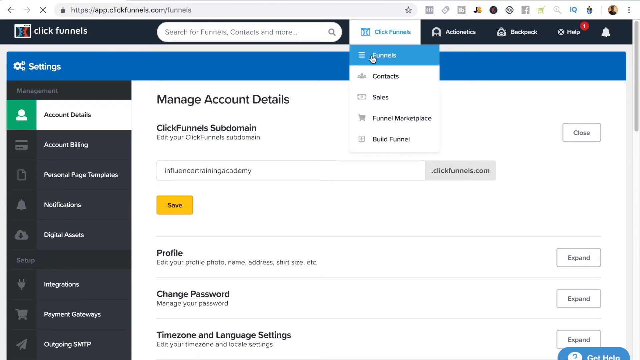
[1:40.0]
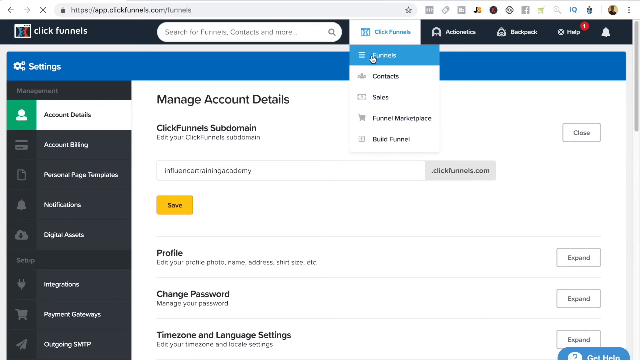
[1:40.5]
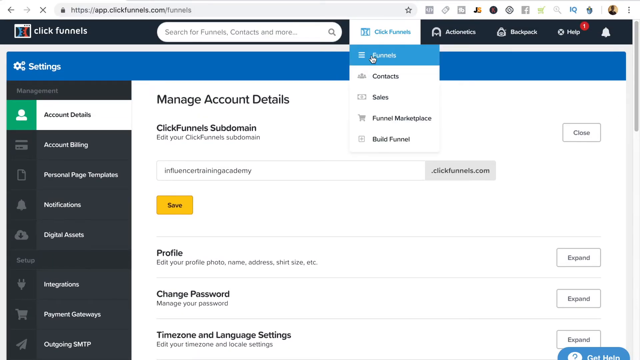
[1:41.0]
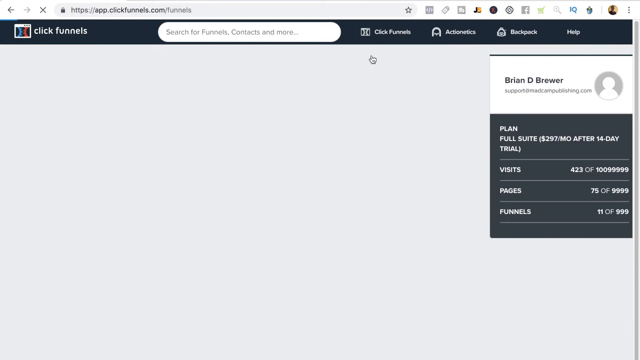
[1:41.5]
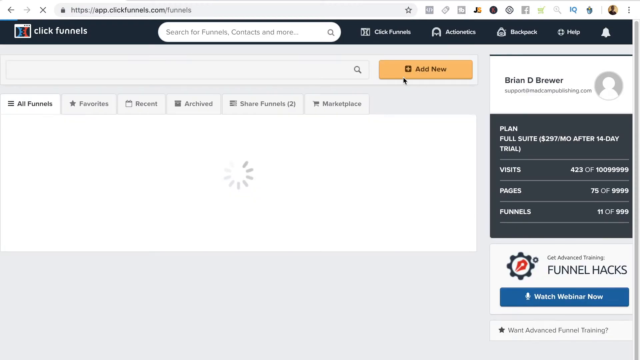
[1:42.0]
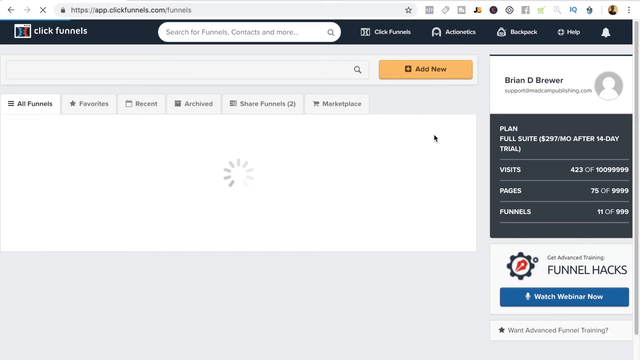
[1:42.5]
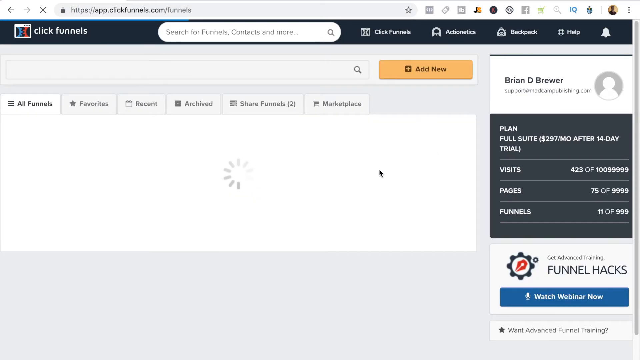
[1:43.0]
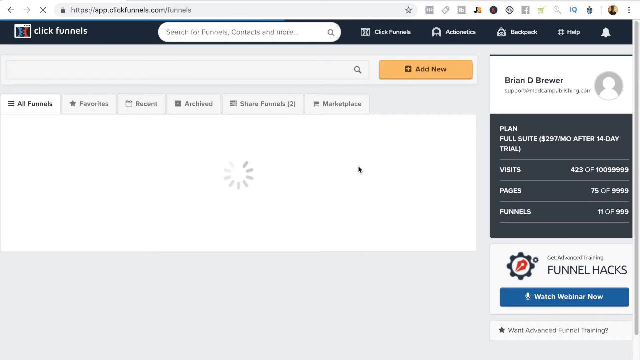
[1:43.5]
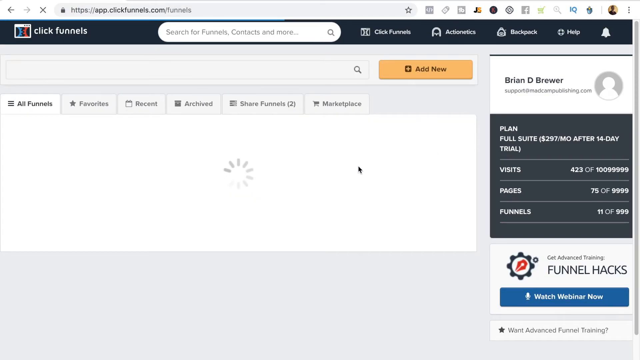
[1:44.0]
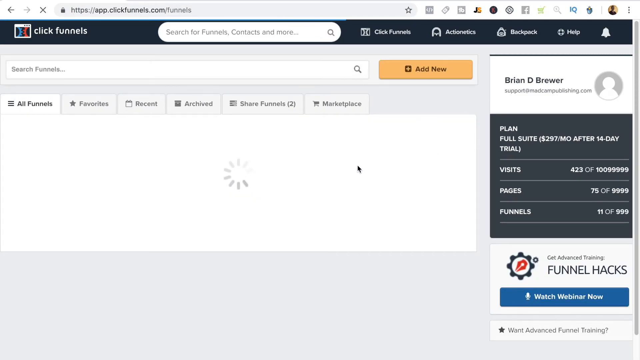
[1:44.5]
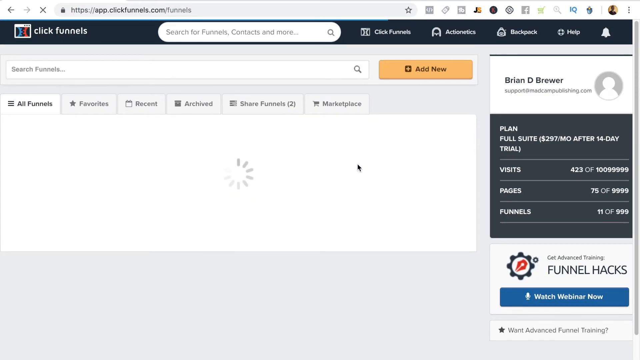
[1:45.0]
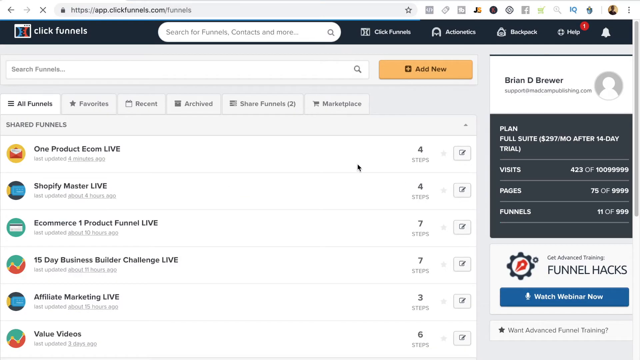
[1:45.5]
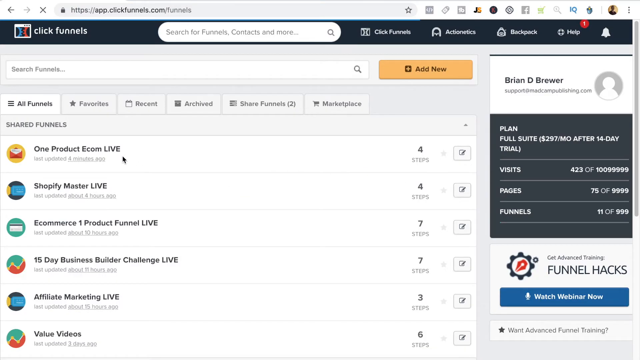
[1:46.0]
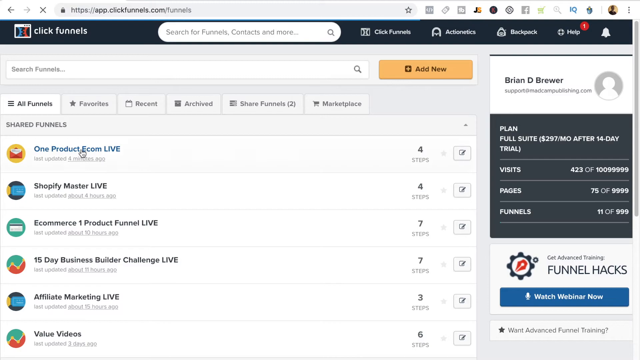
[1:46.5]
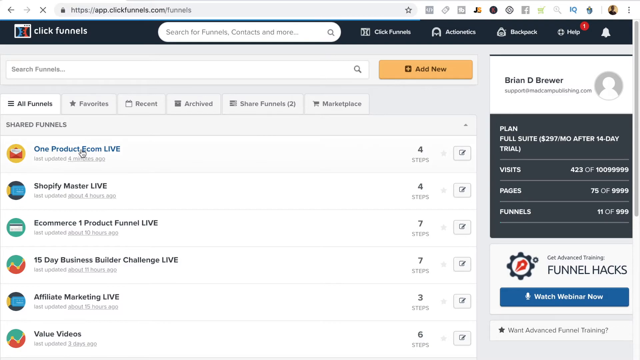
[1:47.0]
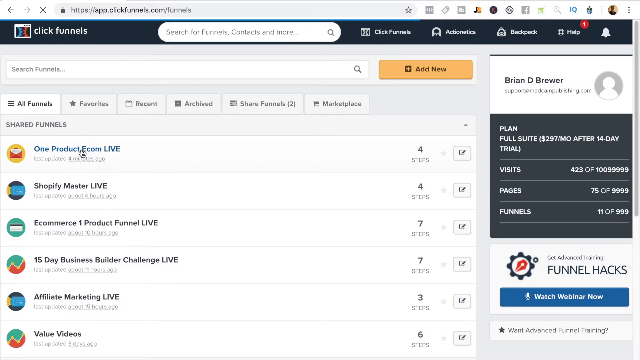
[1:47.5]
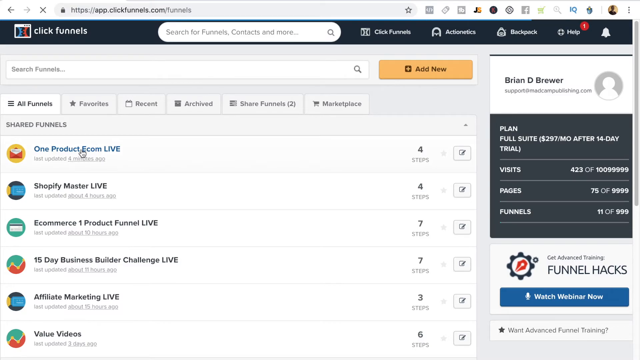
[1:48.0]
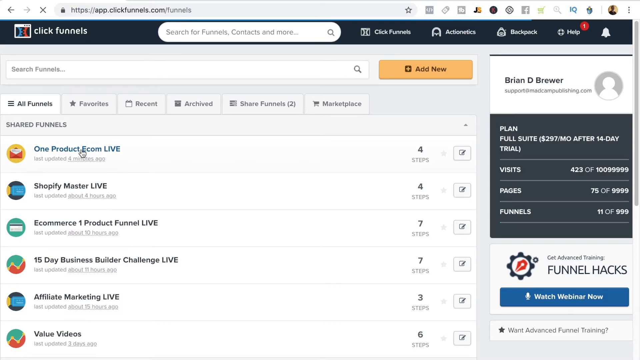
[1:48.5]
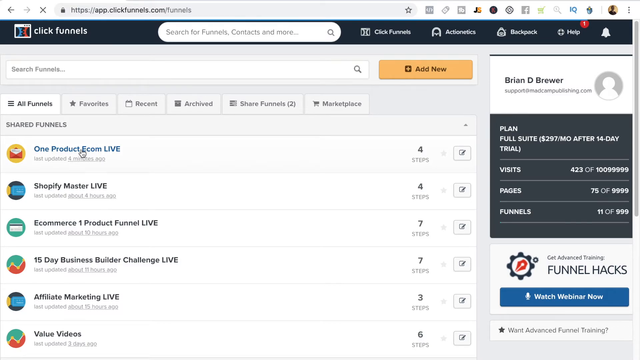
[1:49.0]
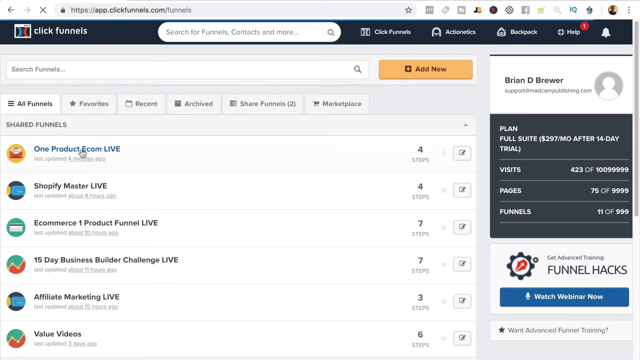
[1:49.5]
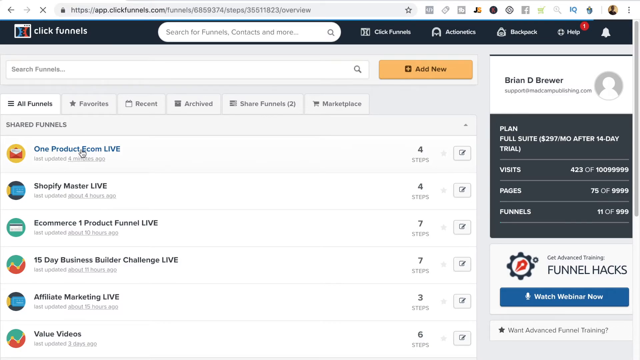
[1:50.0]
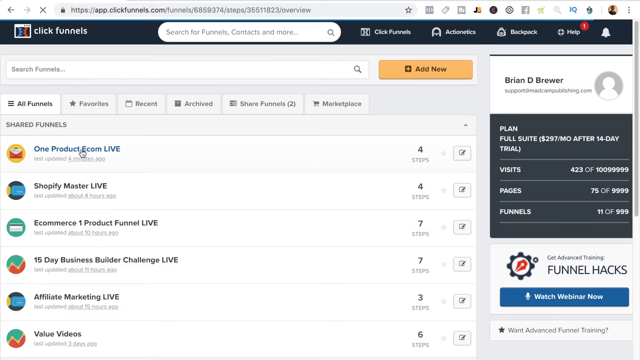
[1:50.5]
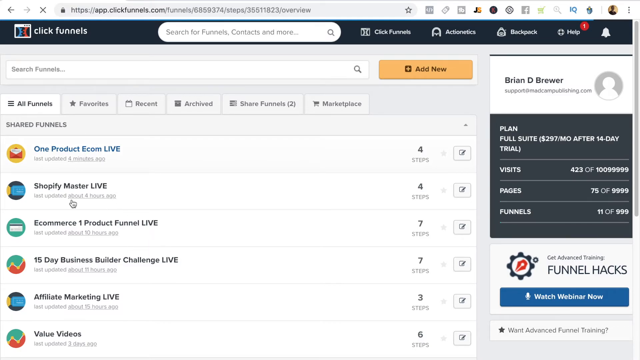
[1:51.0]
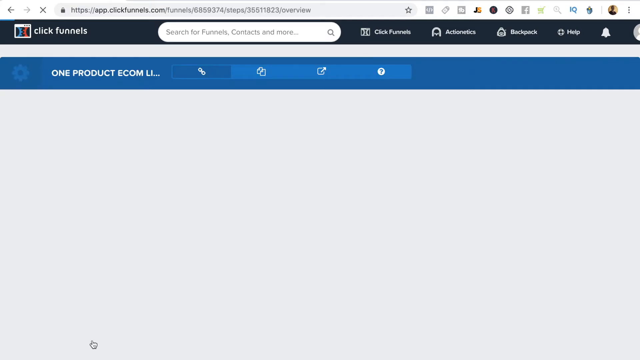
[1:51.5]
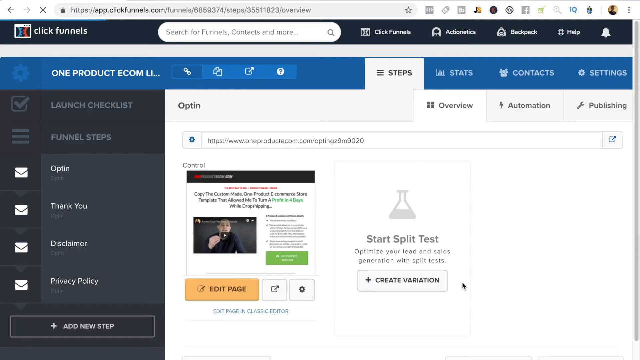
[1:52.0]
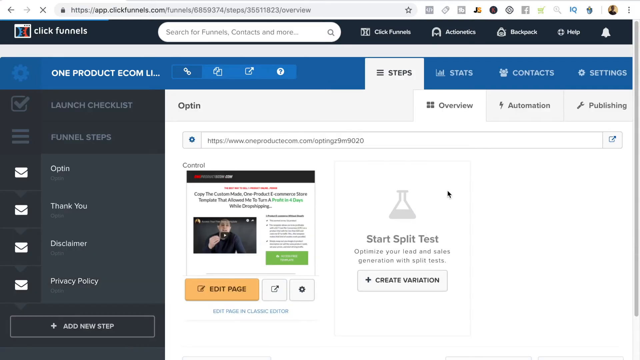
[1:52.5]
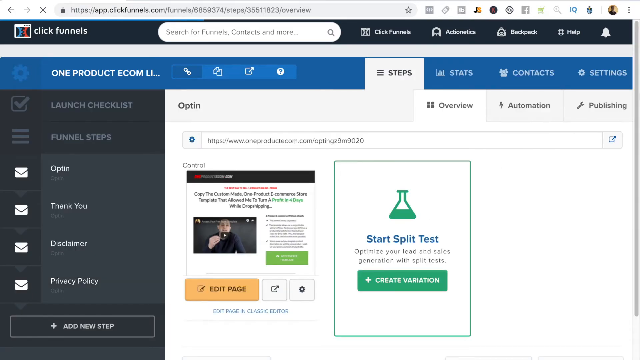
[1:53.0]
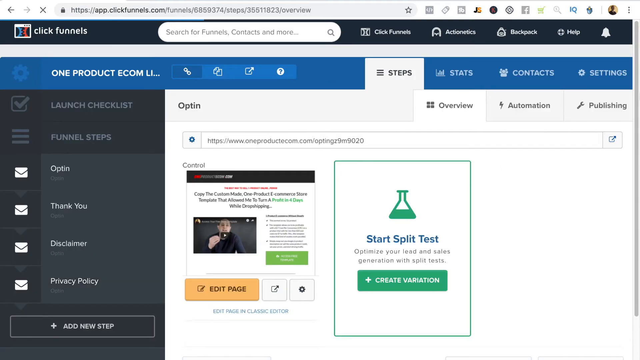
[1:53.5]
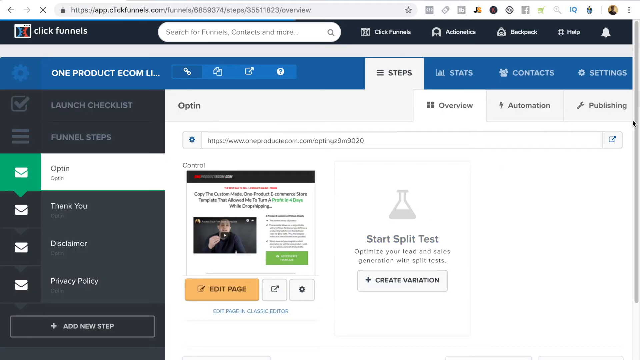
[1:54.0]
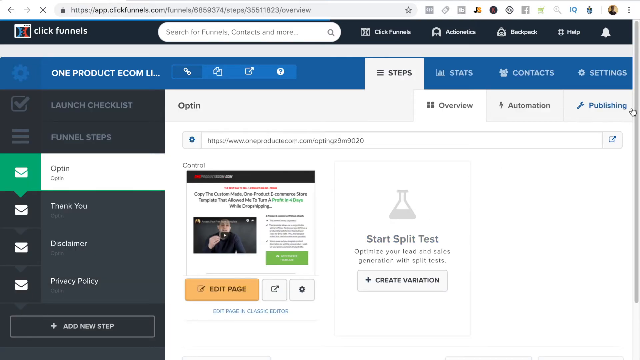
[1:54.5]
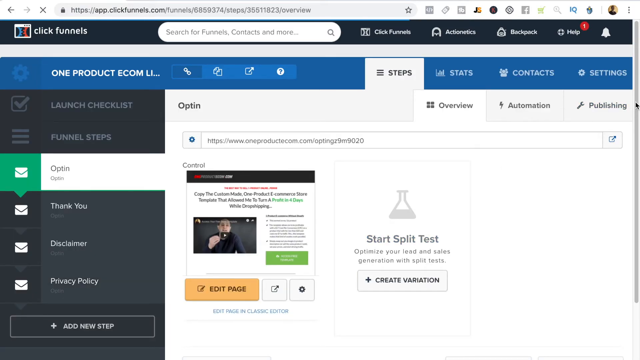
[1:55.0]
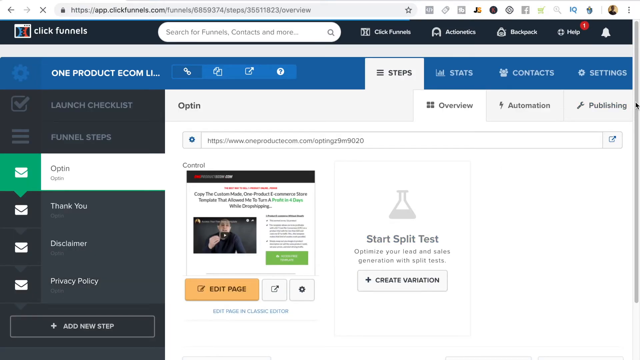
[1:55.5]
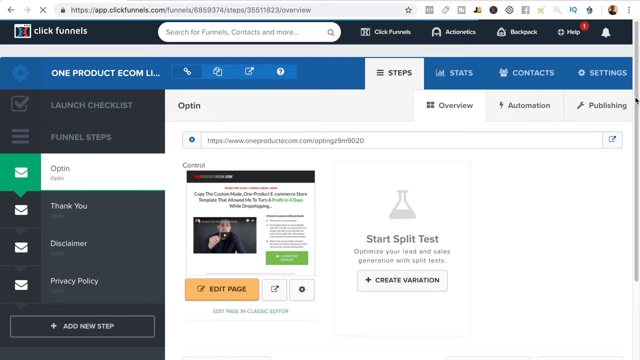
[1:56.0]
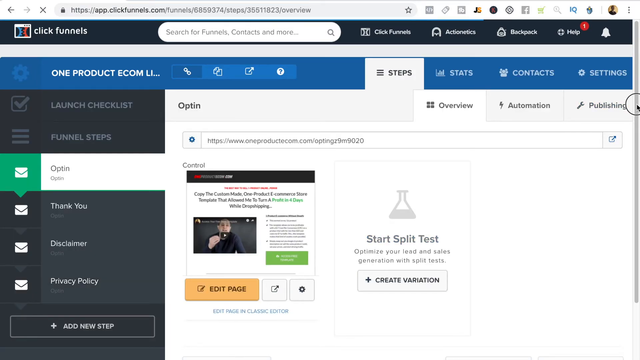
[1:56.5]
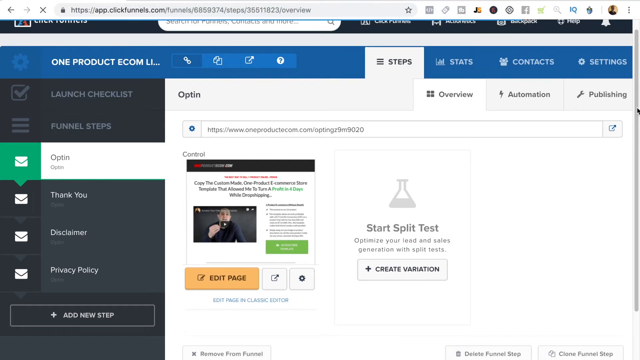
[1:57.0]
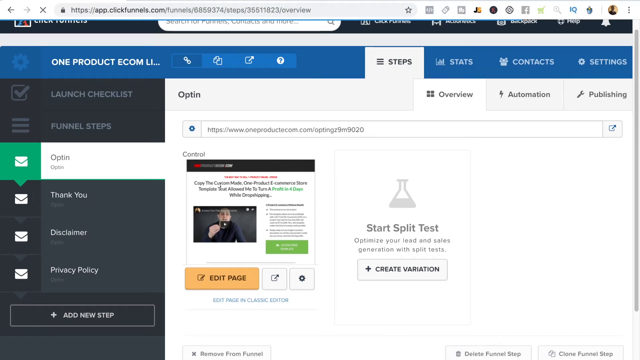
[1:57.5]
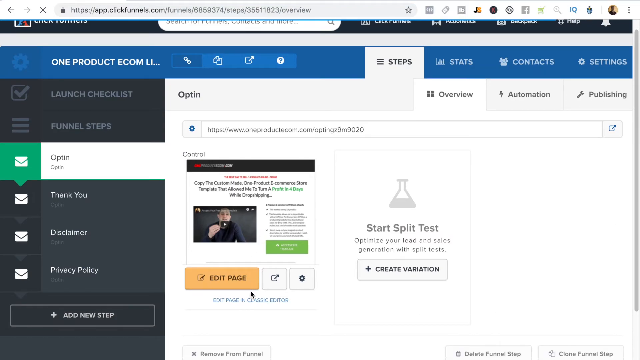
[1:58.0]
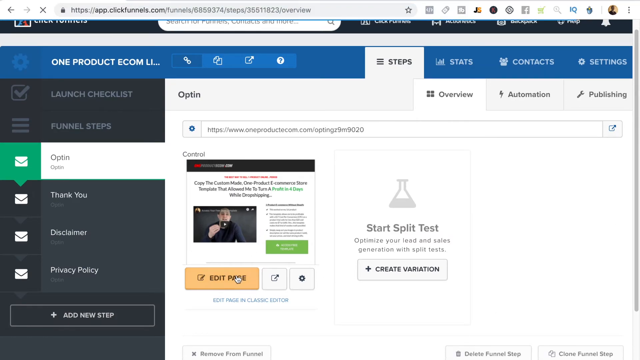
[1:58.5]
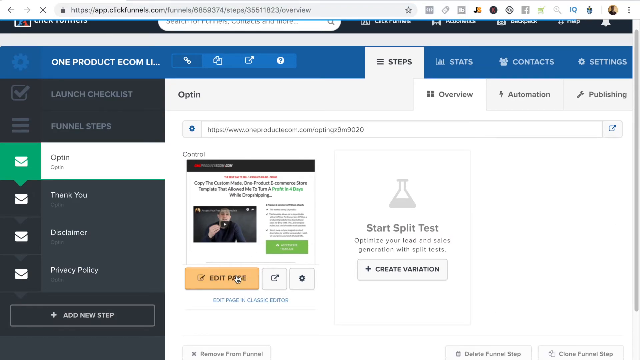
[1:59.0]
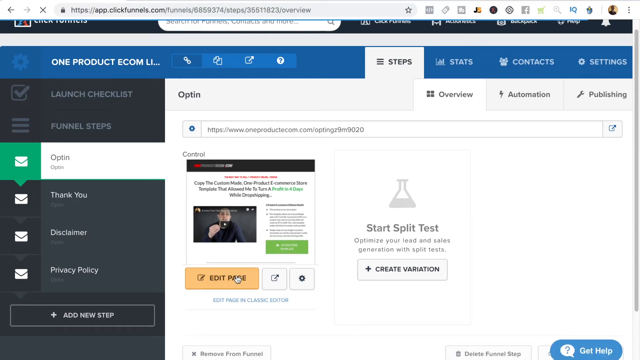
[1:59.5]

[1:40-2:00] The cursor clicks on the Funnels icon in the Click Funnels drop-down menu in the top black banner. The page that loads has a larger search bar at the top of the screen and, to its right, a yellow "Add New" button. On the far right of the screen it says "Brian D. Brewer" with the blank profile icon, and under that "Plan, Full Suite, $297 a month after a 14-day trial," the number of visits, the number of pages, and the number of funnels. In the middle of the page is a table with six tabs at the top, reading from left to right "All Funnels," "Favorites," "Recent," "Archived," "Shared Funnels (2)," and "Marketplace." The All Funnels tab is open, showing six shared funnels: "One Product Ecom Live," "Shopify Master Live," "eCommerce One Product Funnel Live," "15-Day Business Builder Challenge Live," "Affiliate Marketing Live," and "Value Videos." The cursor clicks on One Product Ecom / Live, and another page opens.